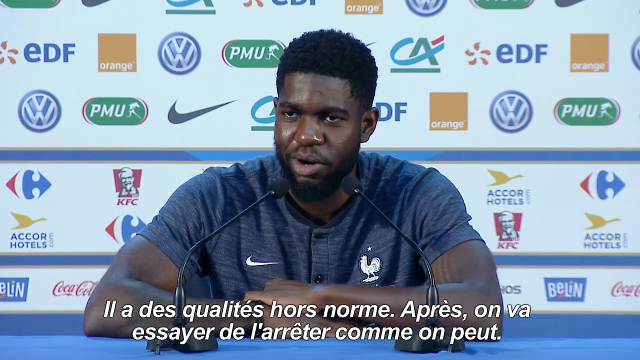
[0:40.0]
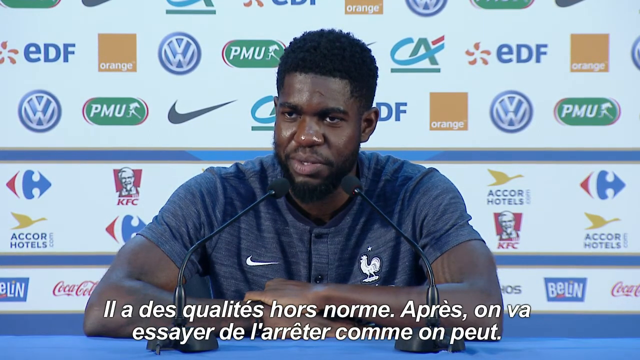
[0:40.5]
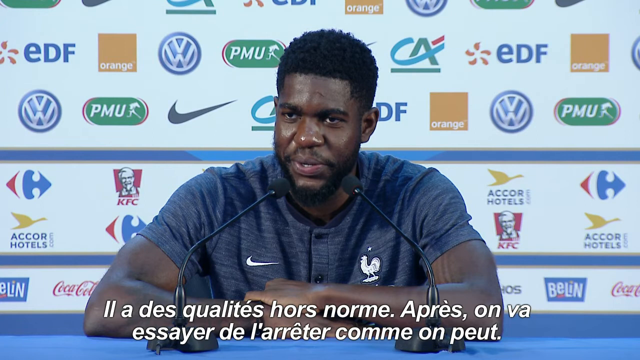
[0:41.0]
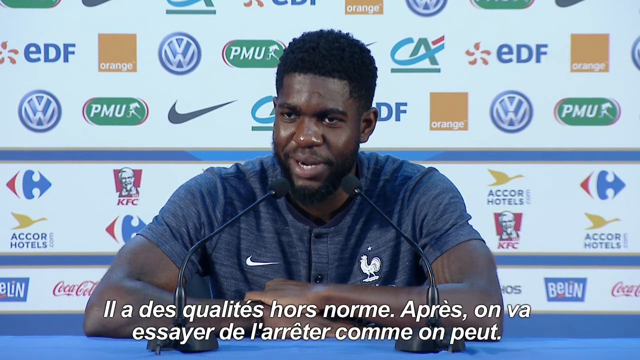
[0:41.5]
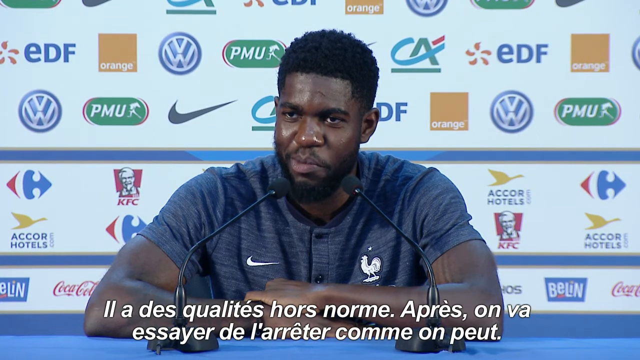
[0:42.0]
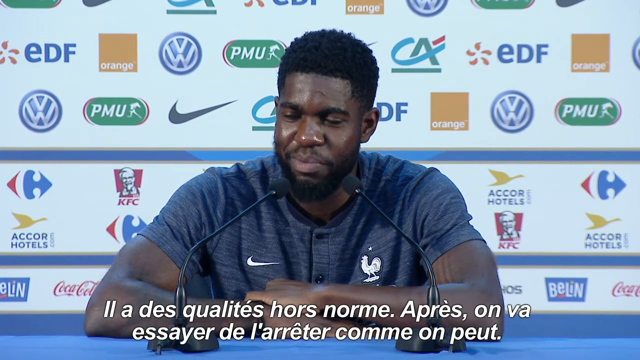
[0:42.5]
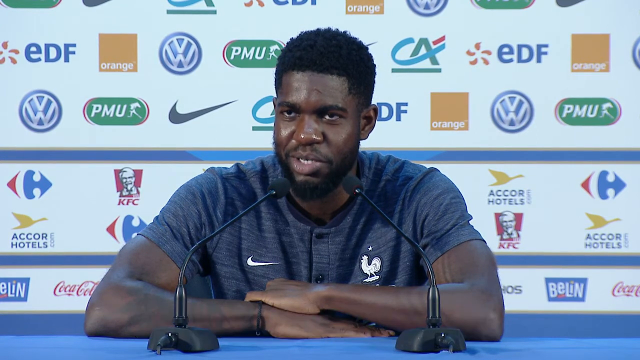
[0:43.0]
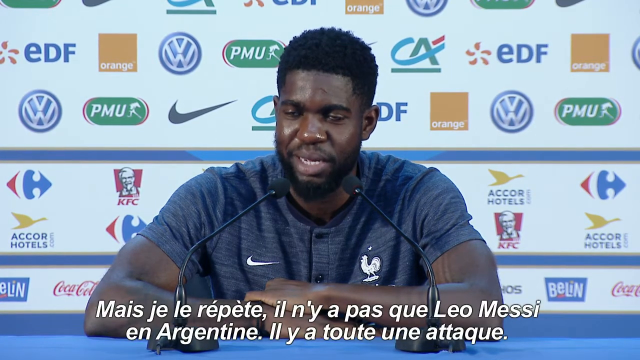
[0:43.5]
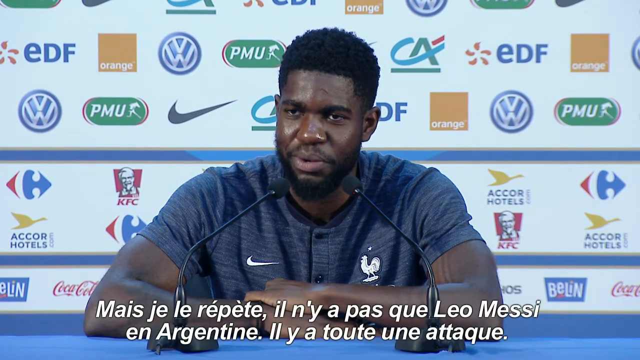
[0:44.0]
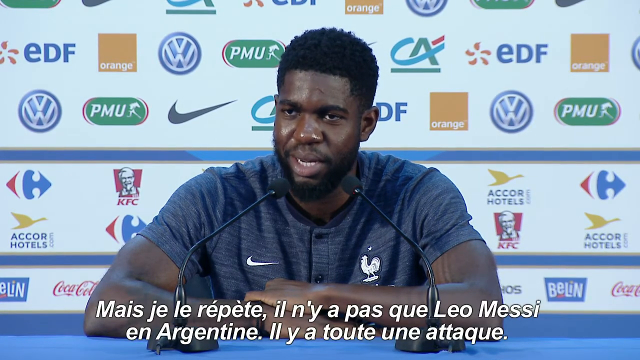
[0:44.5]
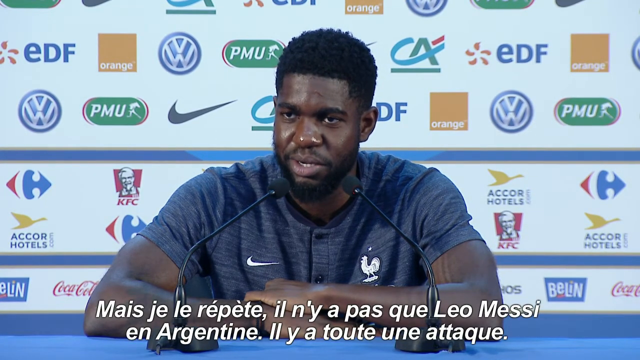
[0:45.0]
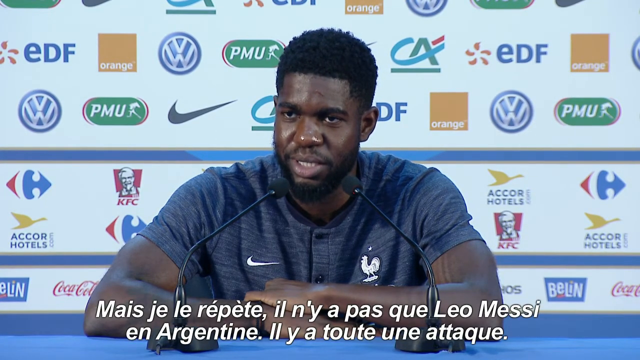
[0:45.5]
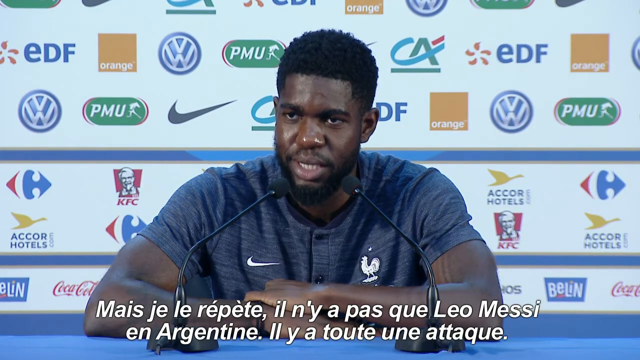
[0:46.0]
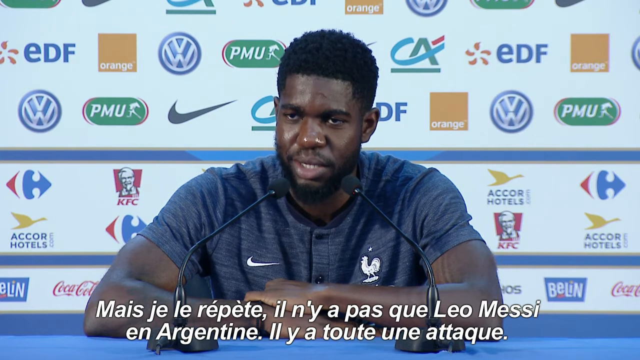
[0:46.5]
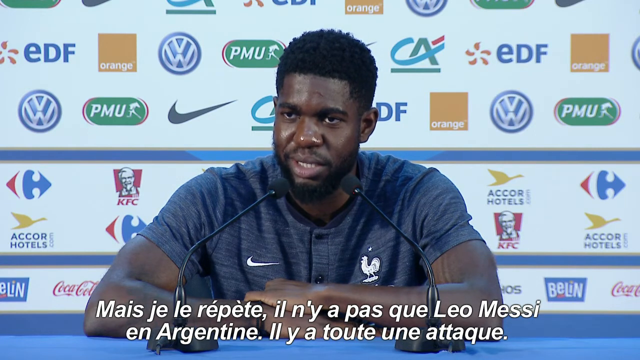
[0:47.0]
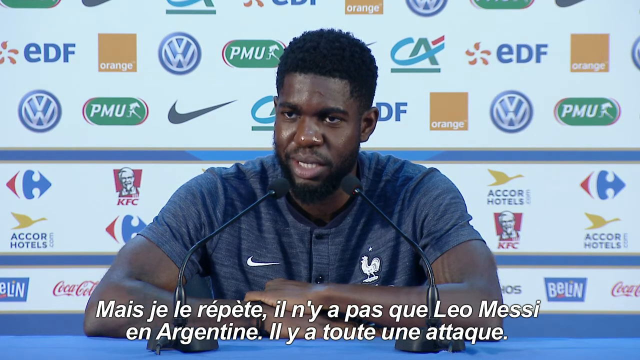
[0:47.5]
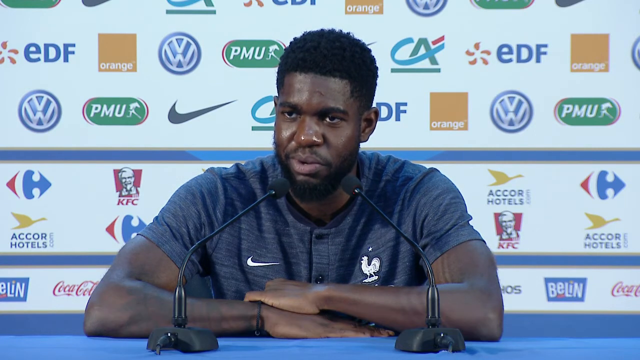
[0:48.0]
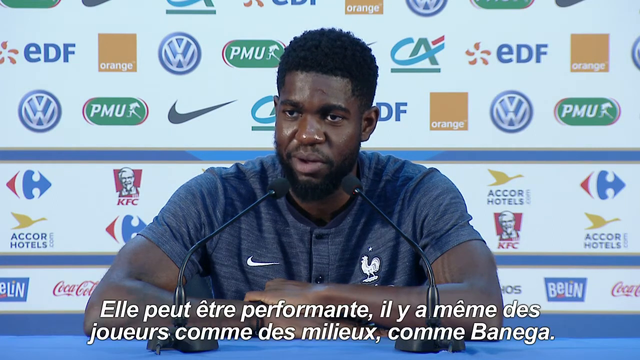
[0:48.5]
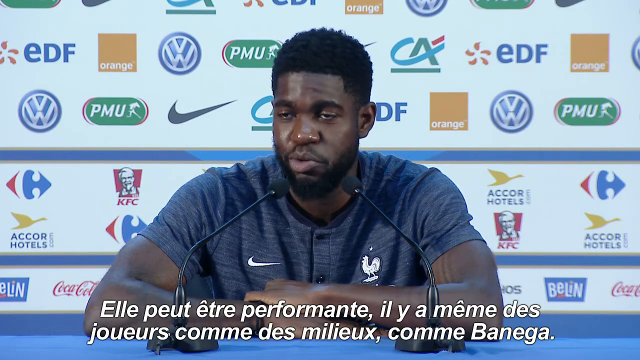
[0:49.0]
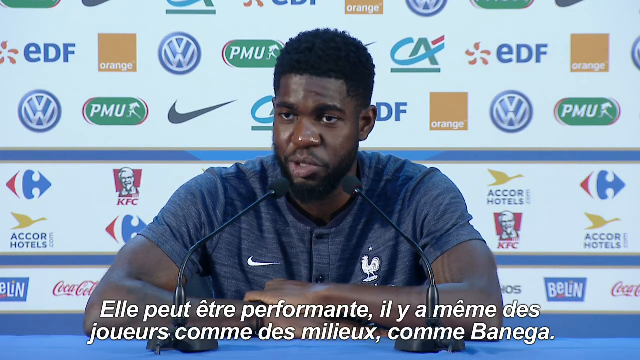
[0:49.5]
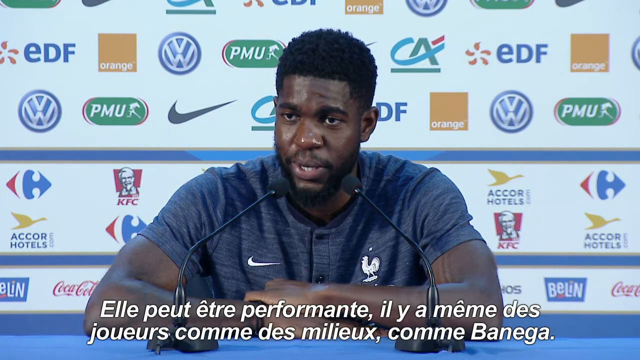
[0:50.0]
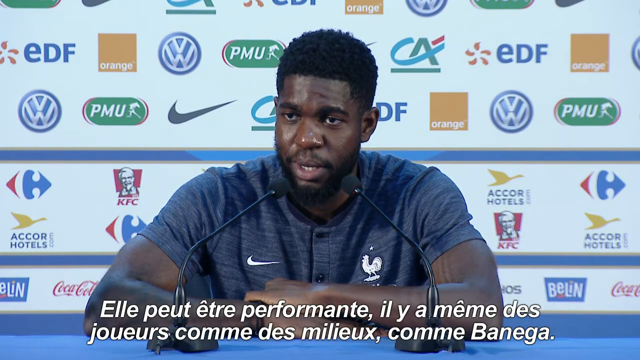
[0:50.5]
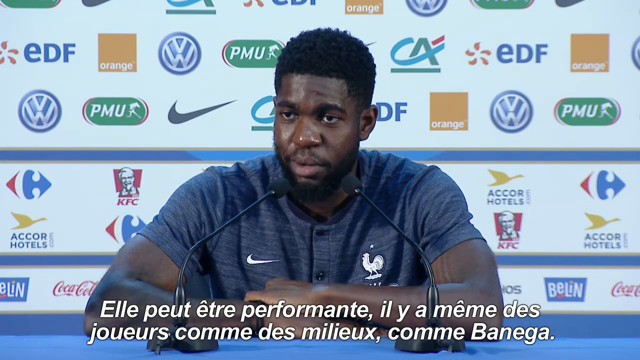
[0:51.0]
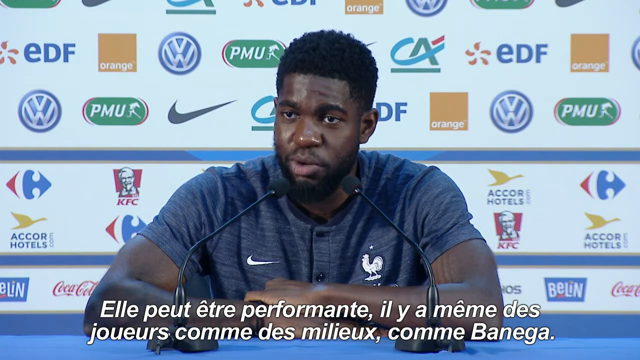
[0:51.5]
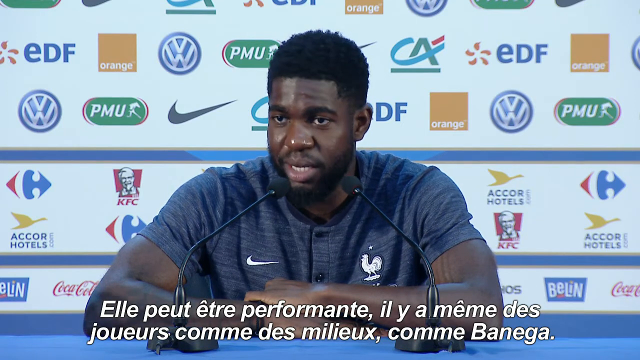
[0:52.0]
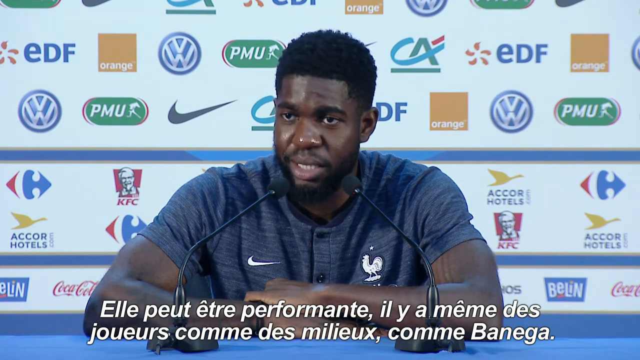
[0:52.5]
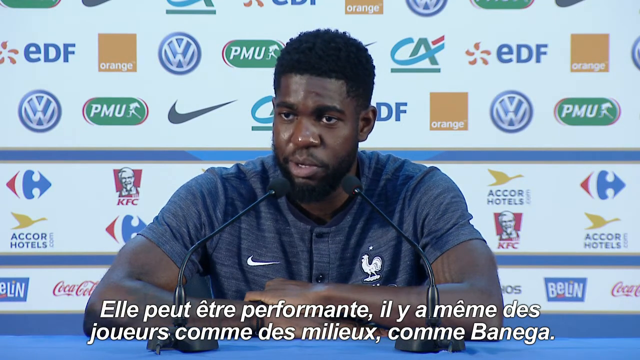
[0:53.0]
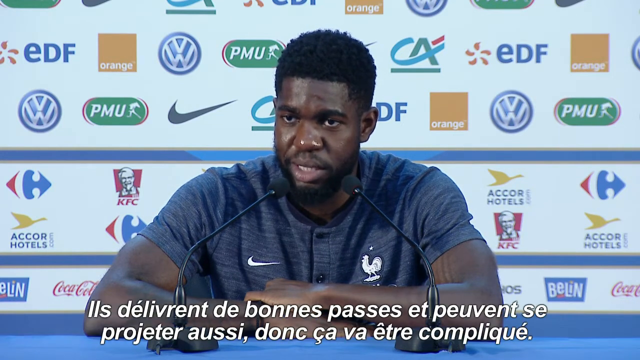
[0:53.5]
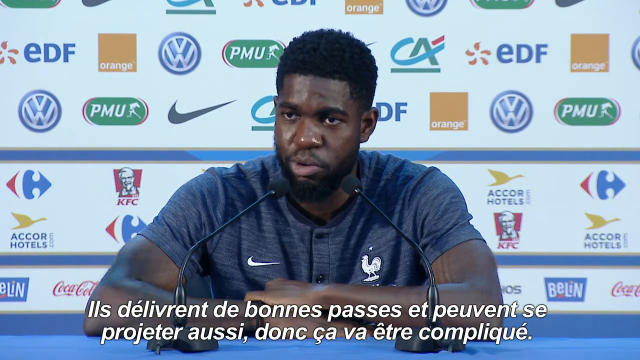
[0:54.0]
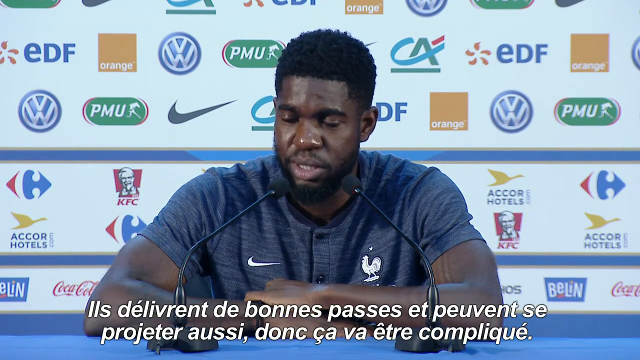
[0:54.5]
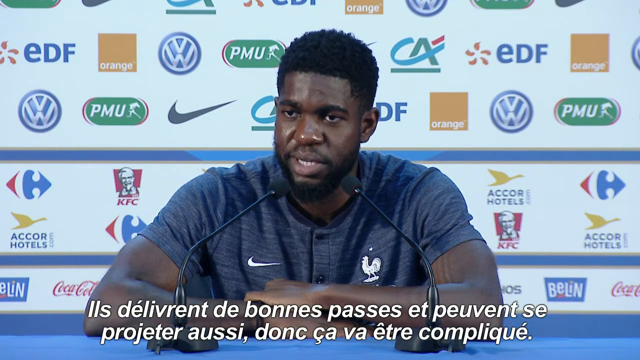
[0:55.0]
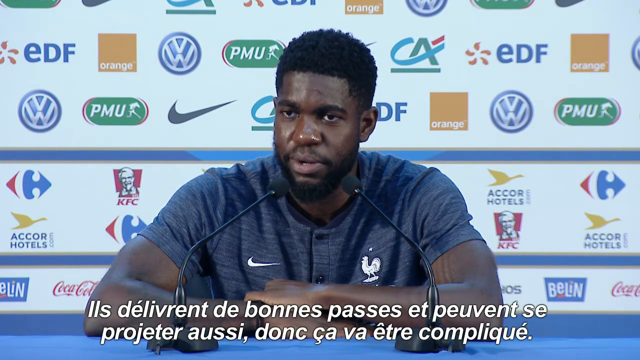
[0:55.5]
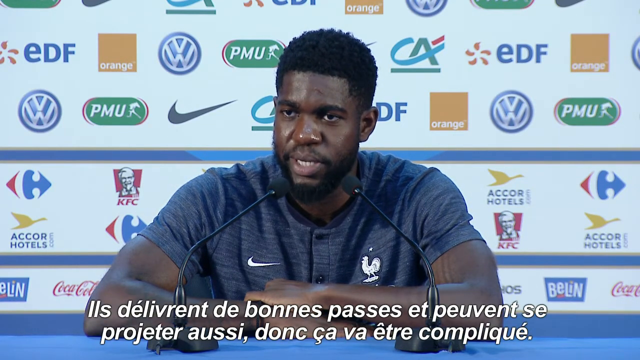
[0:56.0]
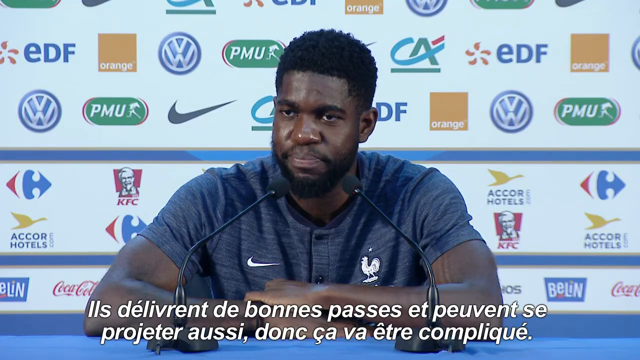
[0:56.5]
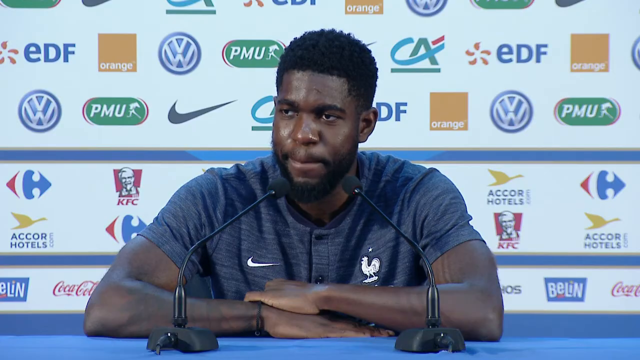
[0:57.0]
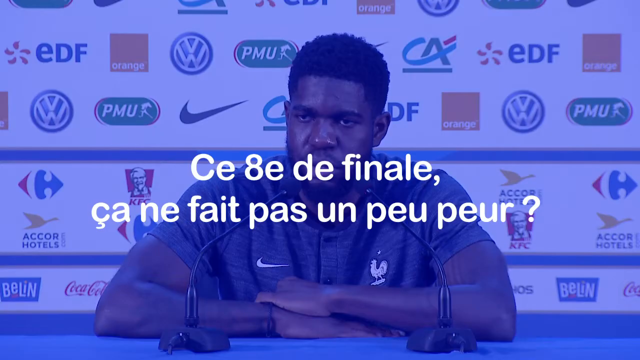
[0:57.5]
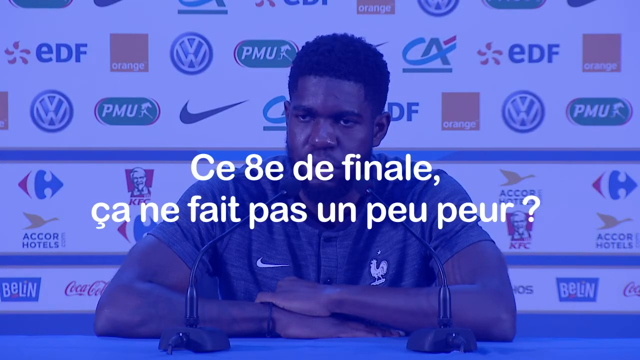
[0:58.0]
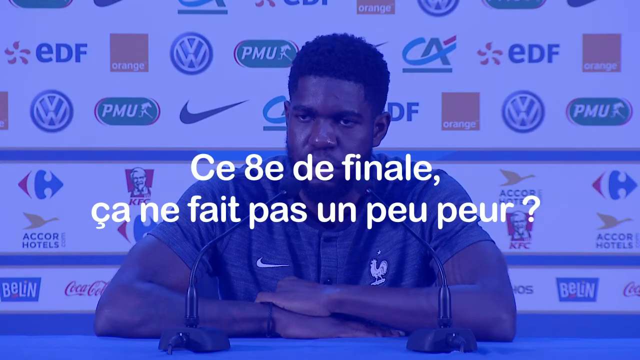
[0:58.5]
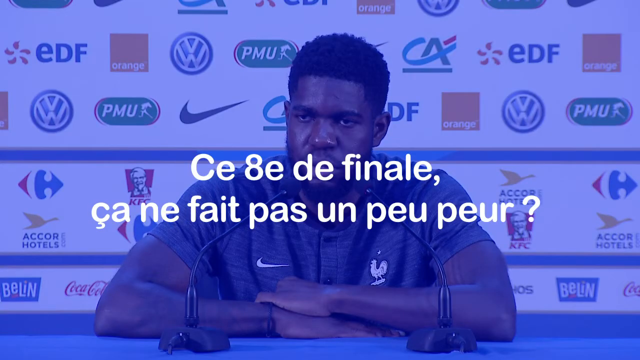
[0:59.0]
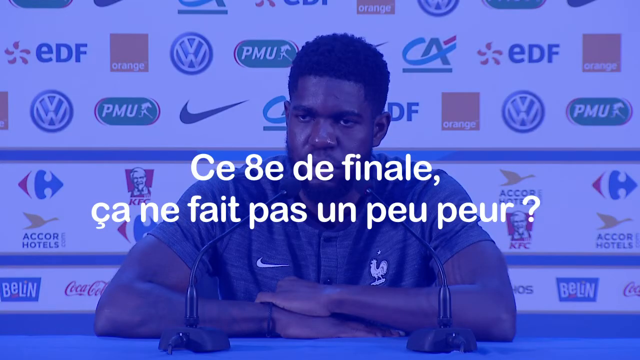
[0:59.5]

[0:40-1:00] The player looks to his right and opens his mouth; his lips form an O, his mouth goes wide, then back to an O, almost a pucker. He blinks, looks up, and looks back at the reporter, and as he talks his mouth returns to an almost O pucker position, then widens, with more of a crease on each side of his face. A caption runs below the screen. His jaw stays slightly open and he nods gently forward and blinks. His mouth opens and closes when he finishes talking and listens to the reporter. When the reporter is done, he widens his eyes, his forehead creases, and his mouth opens; he then sort of tightens his jaw a little, mouth slightly open with lips pressed against his teeth. He drops his jaw, looking deadpan at the reporter, then leans forward, his head tilting forward and moving to the right as he answers with his mouth open. He blinks and gives a slight head nod while the caption at the bottom keeps changing. His mouth opens wide, then he closes it, presses his lips together, and looks to somebody else. The screen then freezes on a new question with the blue background.